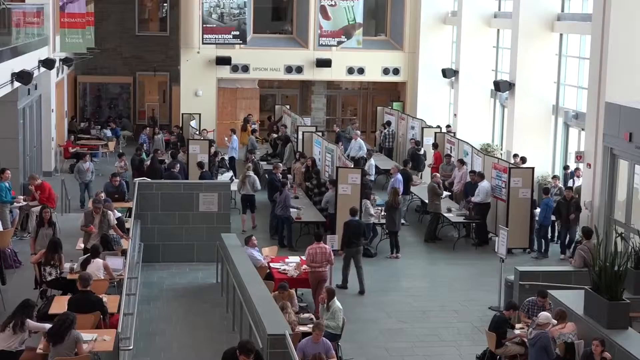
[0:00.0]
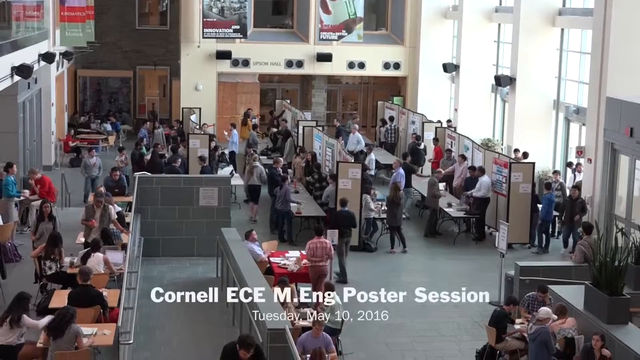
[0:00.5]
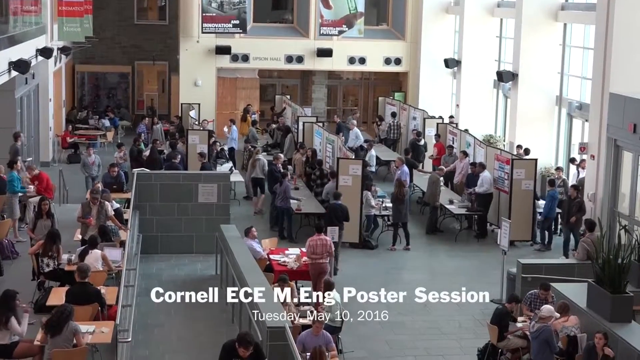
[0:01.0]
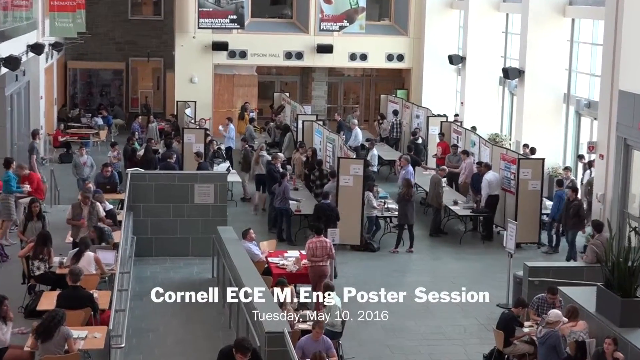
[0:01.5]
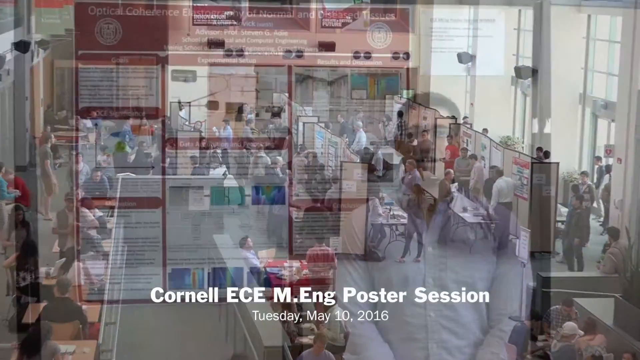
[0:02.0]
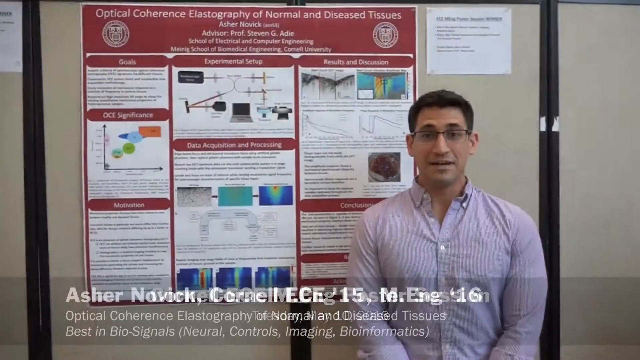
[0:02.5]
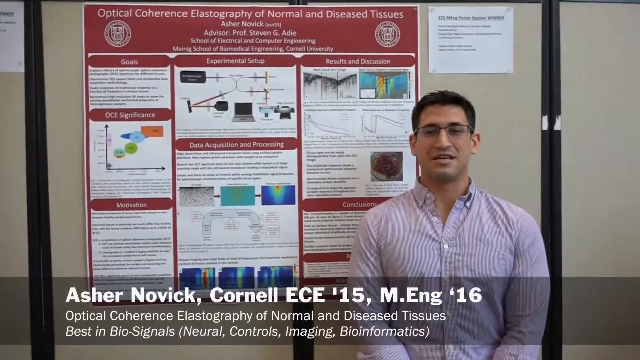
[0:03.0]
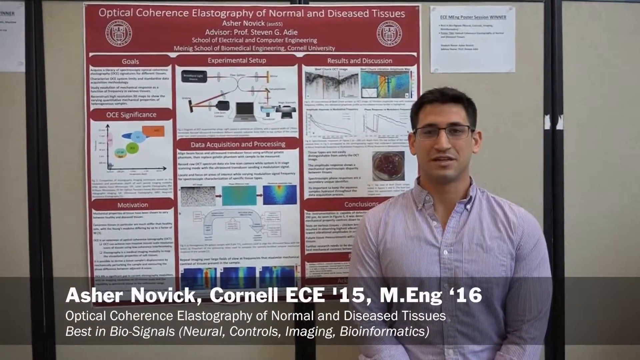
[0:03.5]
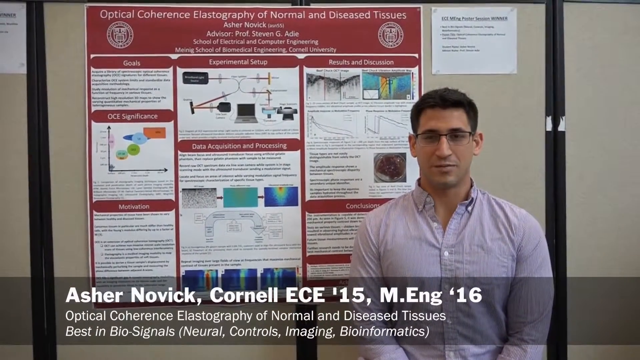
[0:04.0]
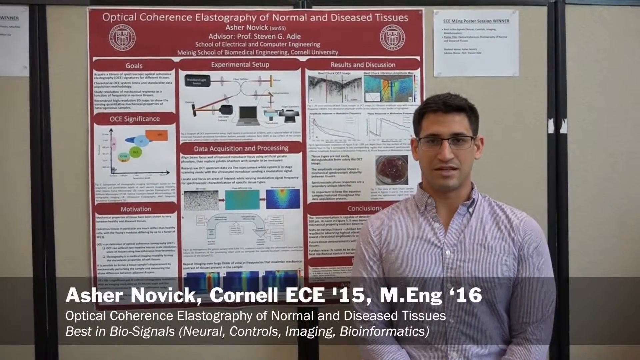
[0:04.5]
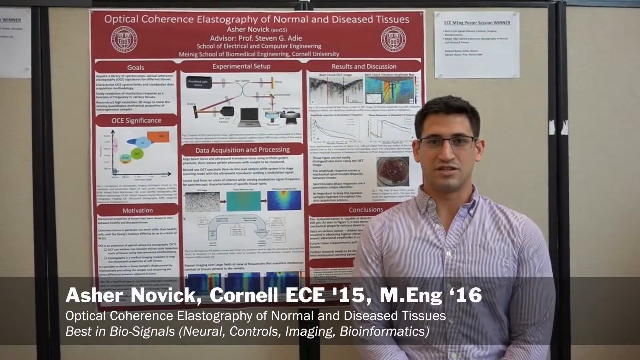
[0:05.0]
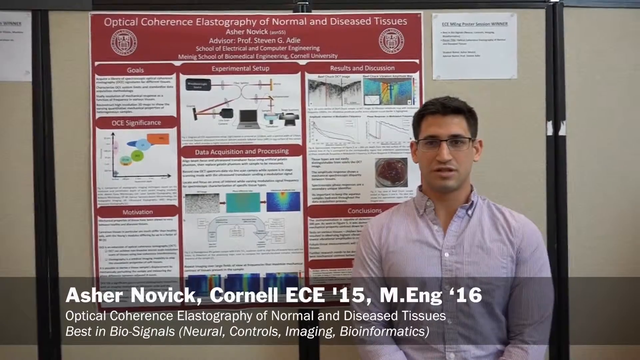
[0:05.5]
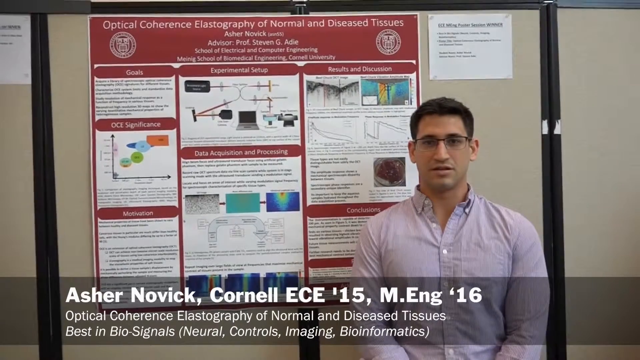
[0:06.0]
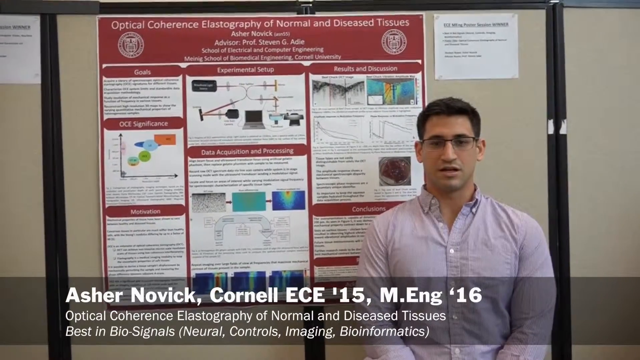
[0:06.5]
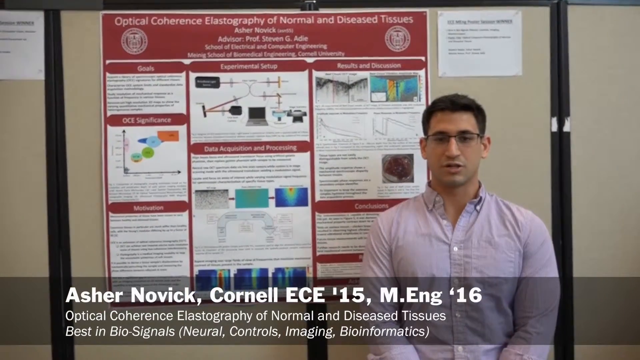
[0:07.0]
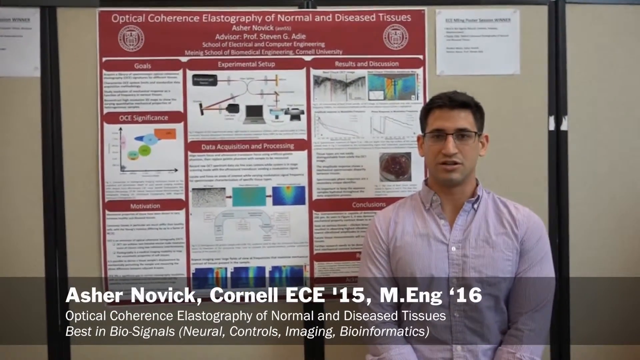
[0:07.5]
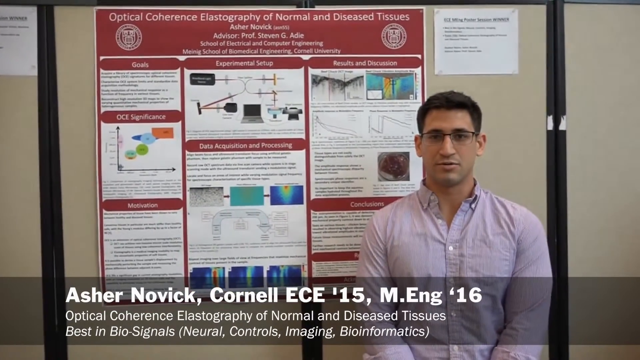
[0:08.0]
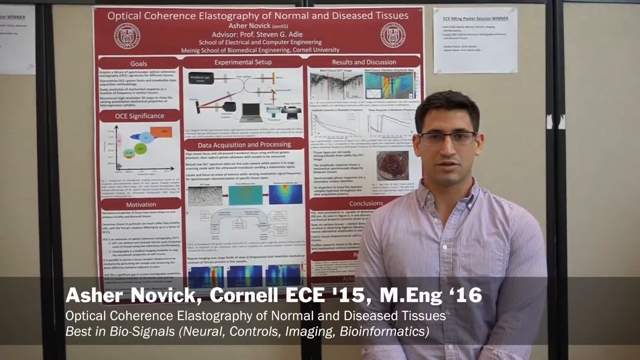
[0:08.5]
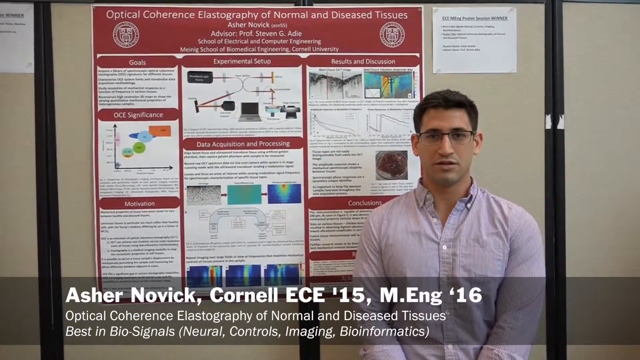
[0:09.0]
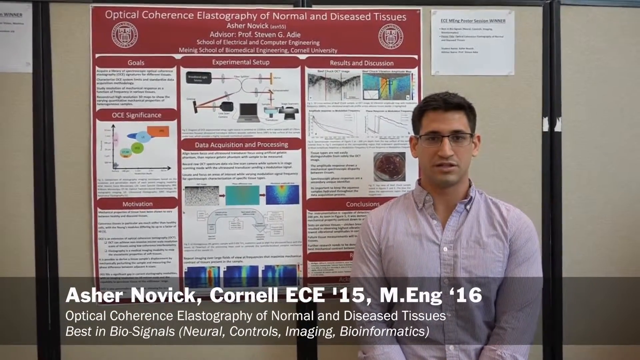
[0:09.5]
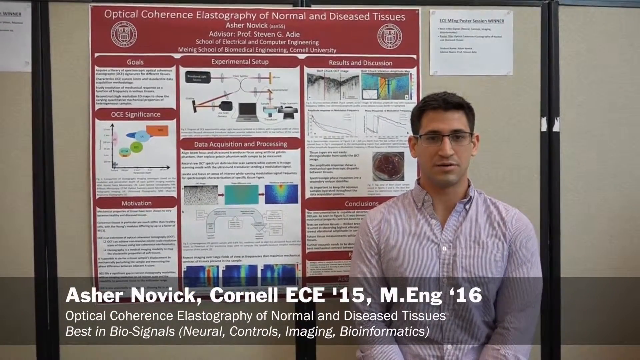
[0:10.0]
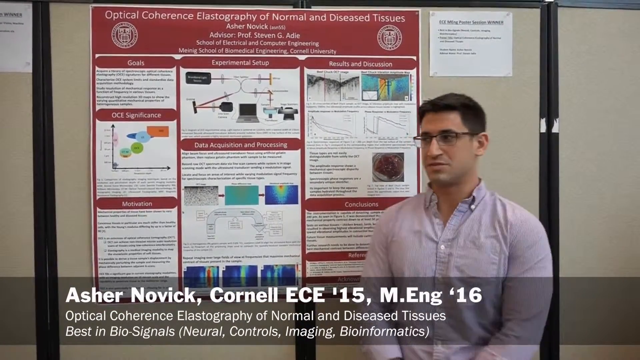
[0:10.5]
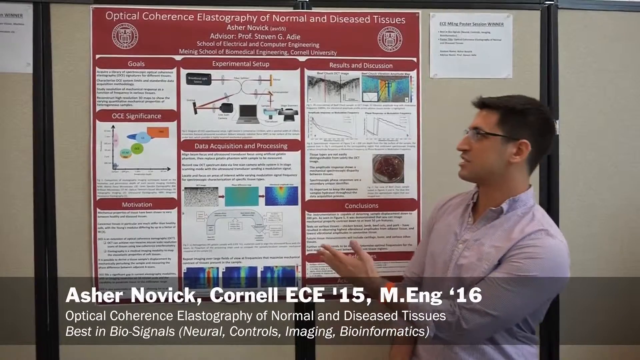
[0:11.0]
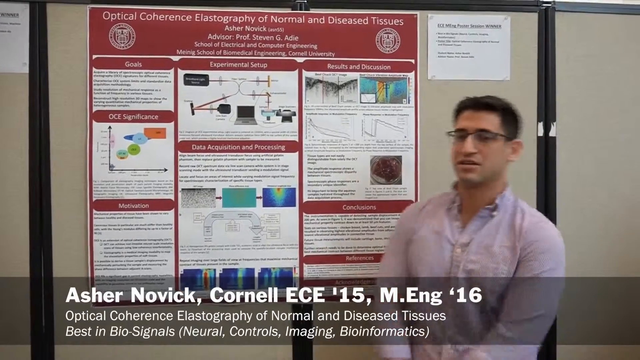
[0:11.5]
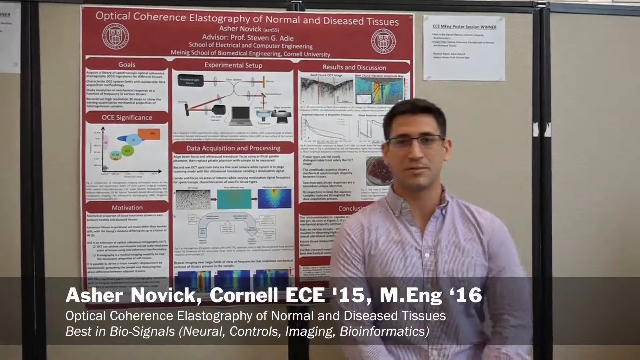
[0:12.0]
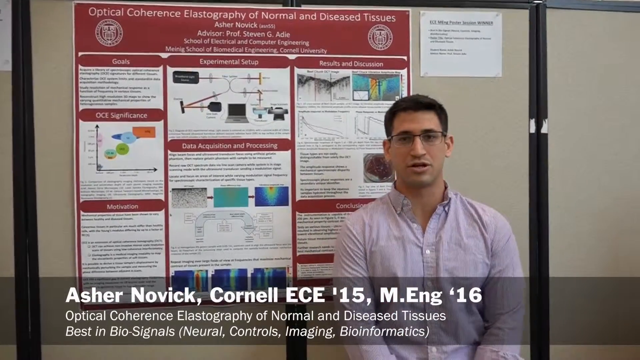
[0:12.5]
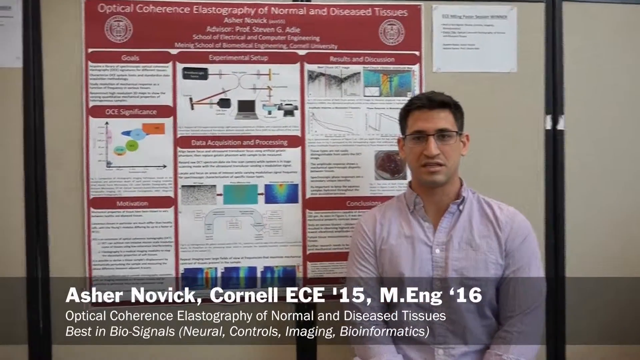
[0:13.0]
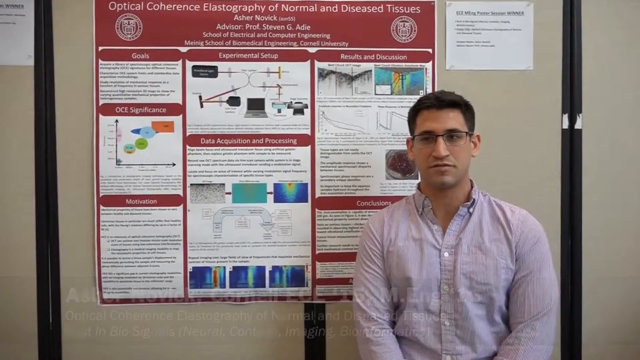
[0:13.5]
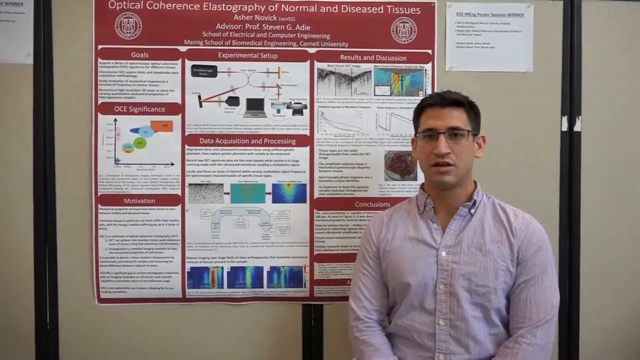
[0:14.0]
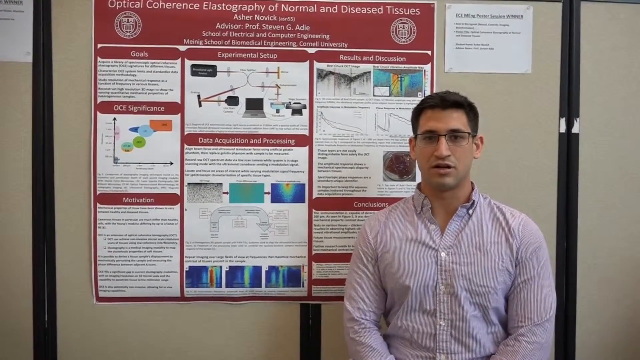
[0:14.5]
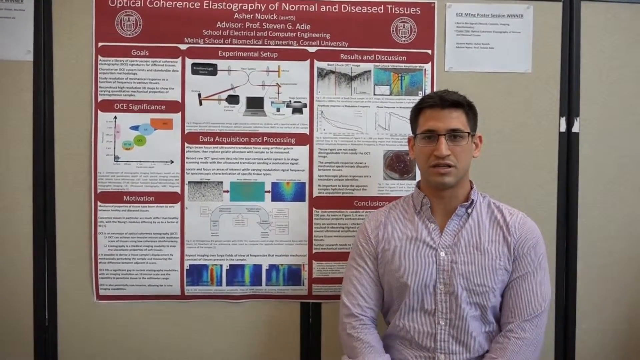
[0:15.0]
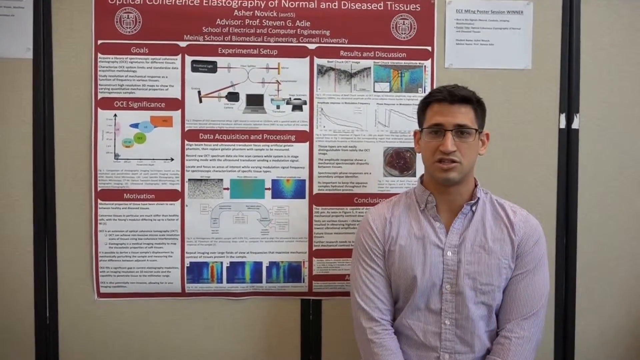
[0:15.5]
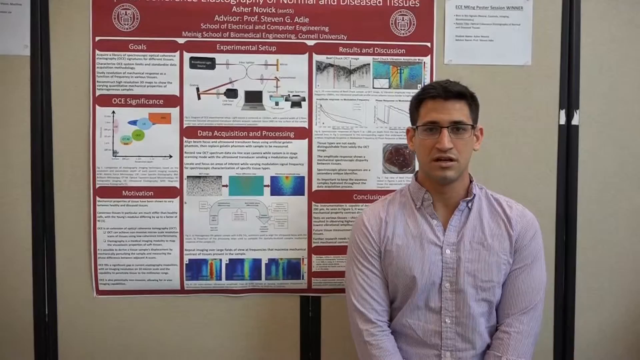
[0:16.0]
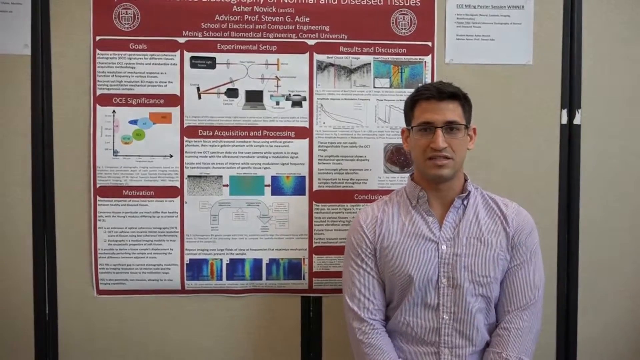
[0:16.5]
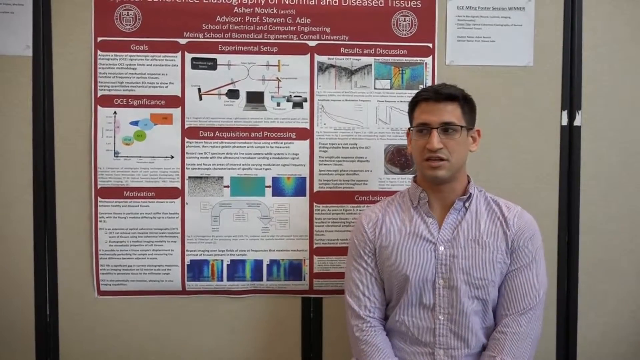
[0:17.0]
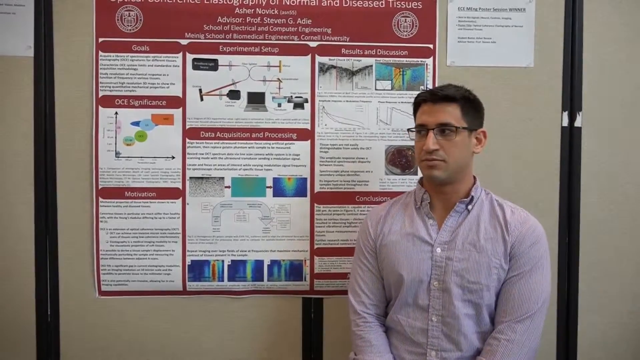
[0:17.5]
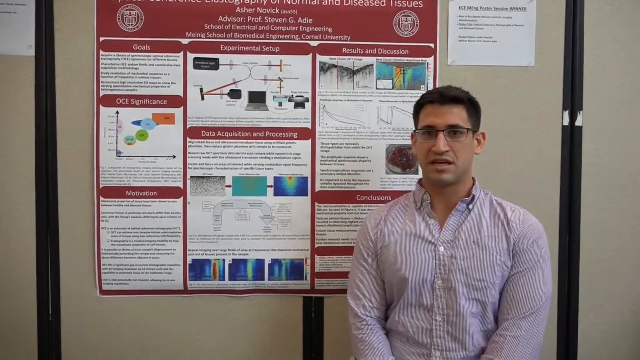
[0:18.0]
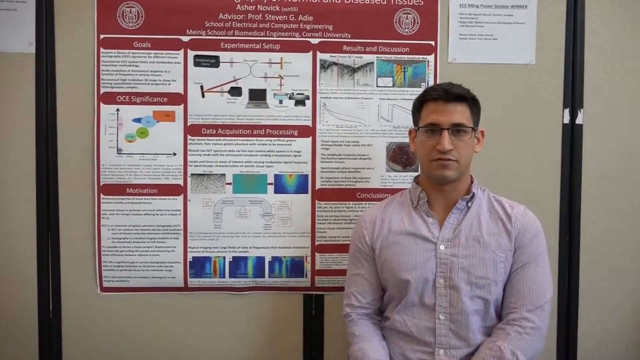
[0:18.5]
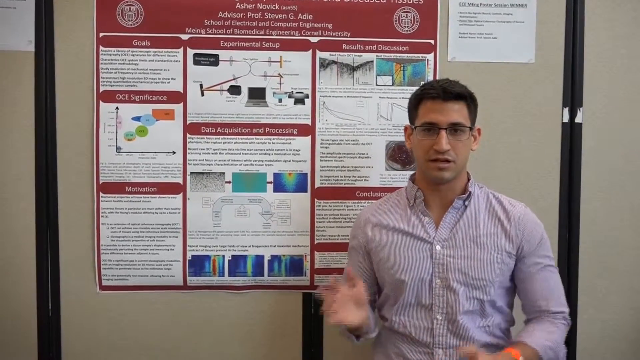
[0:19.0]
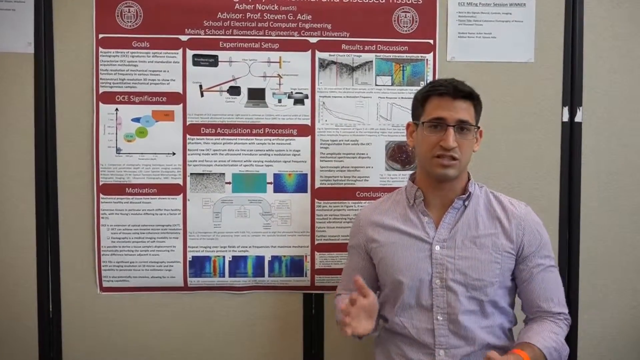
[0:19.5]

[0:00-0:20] A big office building is shown, with people walking around and talking. A man stands at the front wearing a blue button-down shirt and clear glasses. Text reads "optical coherence elastography of normal and diseased tissues." A diagram is shown, and there is a white sign over his head. He looks ahead at the camera, talks, and points at the chart, which has some graphics on it. He stands looking forward, moving his hands. The video then returns to the crowd of people standing around. Text reads "Cornell ECE M engineer poster session, Tuesday, May 10th, 2016," followed by "Asher Novick Cornell ECE 15 M.ENG 16." Different tables inside are shown, with people standing at them and talking to other people near the tables, getting information from them.